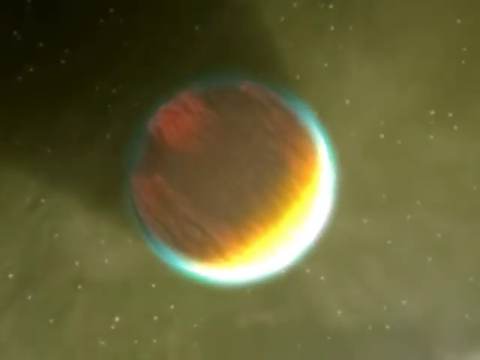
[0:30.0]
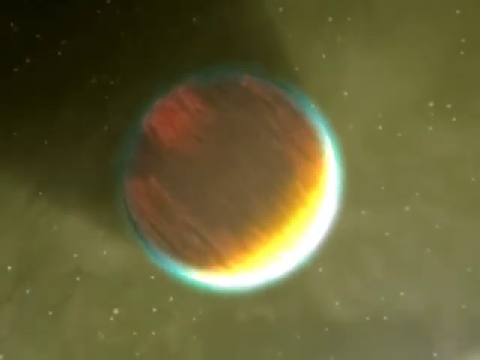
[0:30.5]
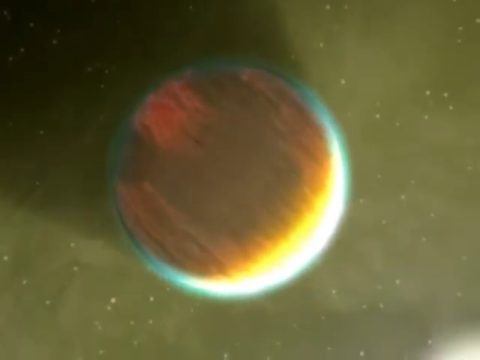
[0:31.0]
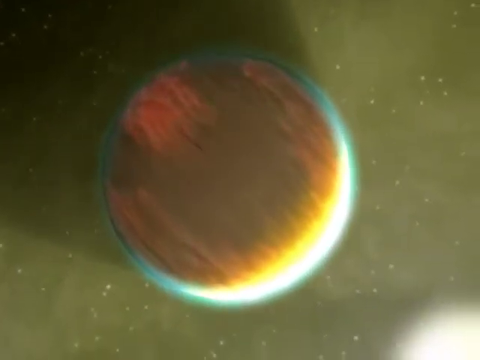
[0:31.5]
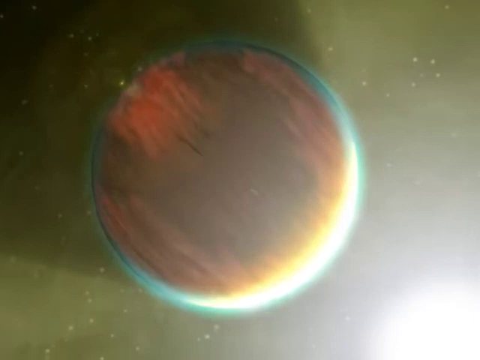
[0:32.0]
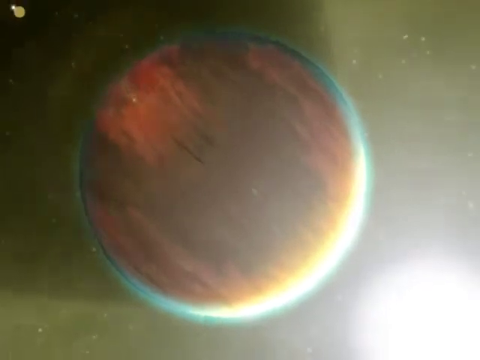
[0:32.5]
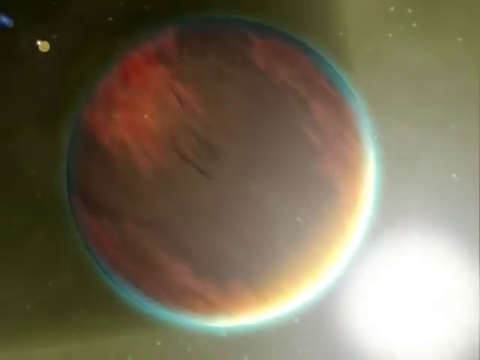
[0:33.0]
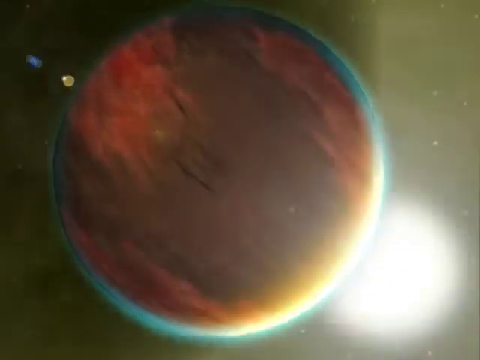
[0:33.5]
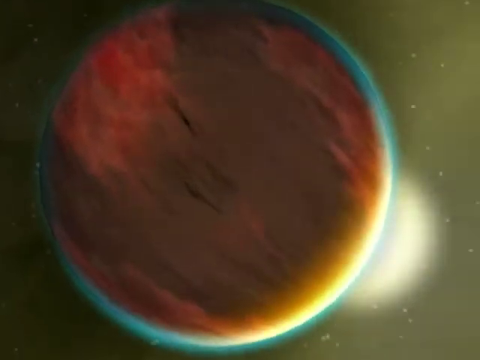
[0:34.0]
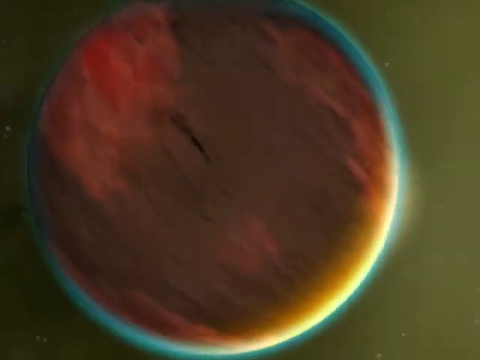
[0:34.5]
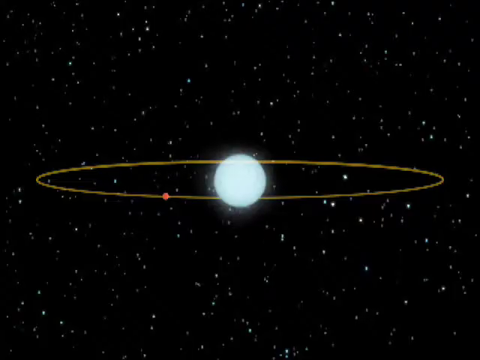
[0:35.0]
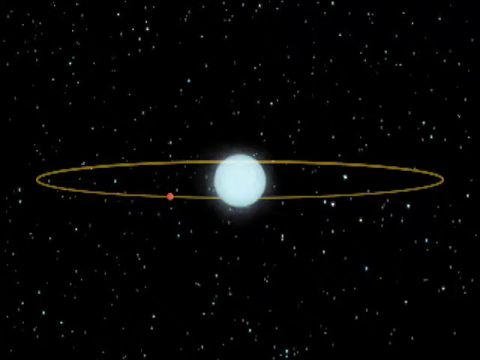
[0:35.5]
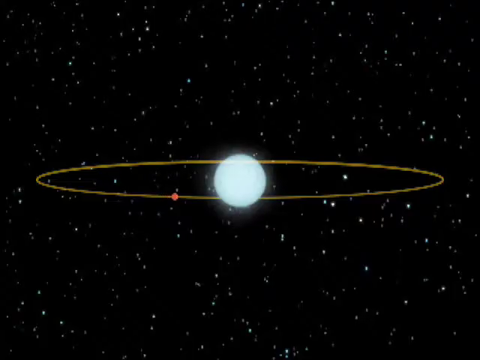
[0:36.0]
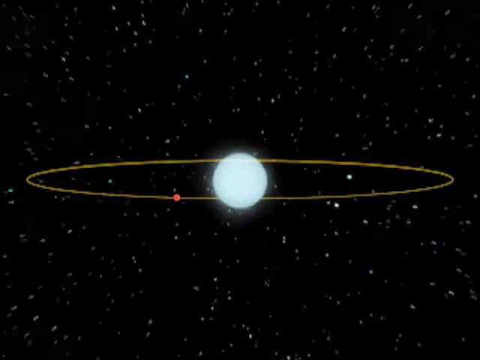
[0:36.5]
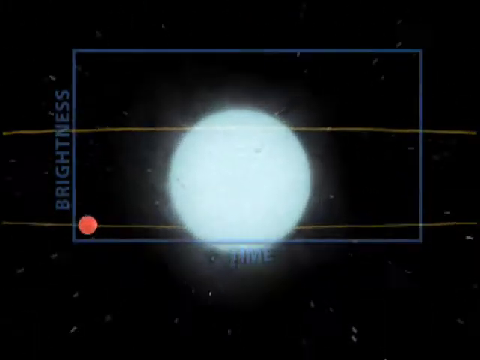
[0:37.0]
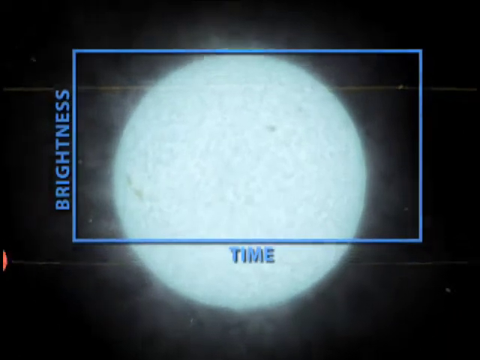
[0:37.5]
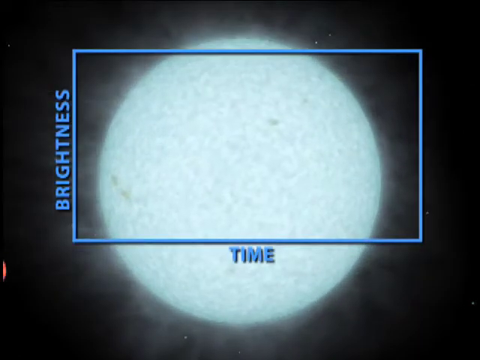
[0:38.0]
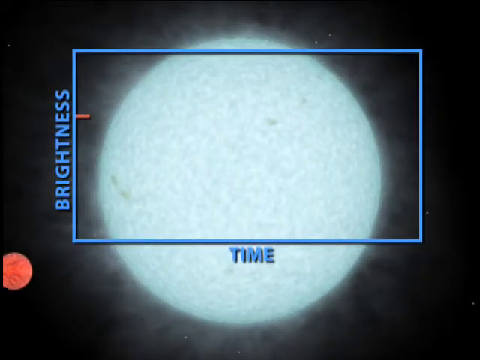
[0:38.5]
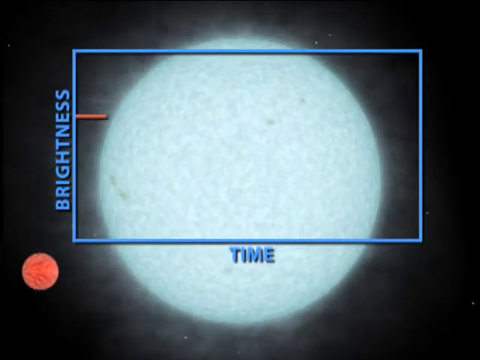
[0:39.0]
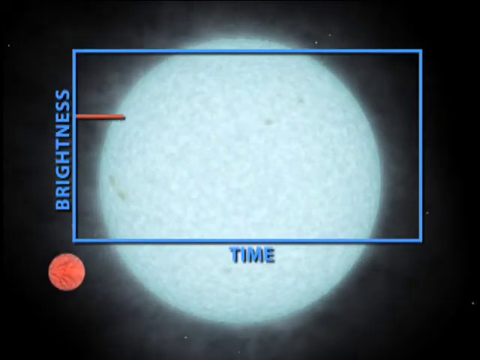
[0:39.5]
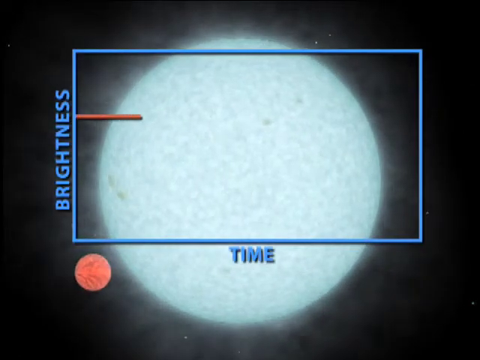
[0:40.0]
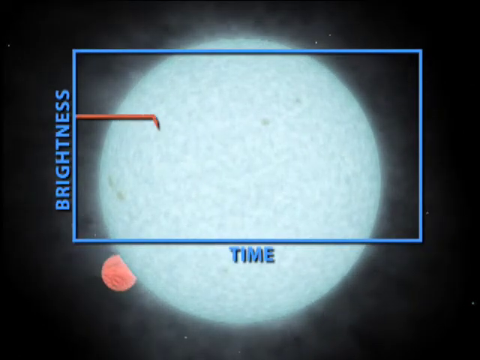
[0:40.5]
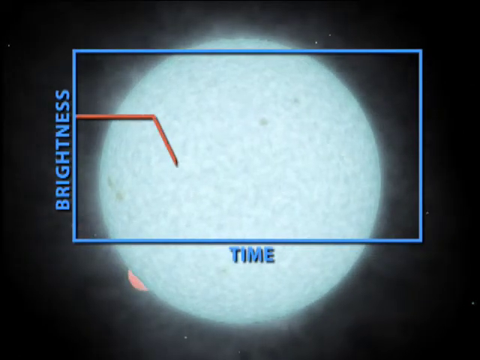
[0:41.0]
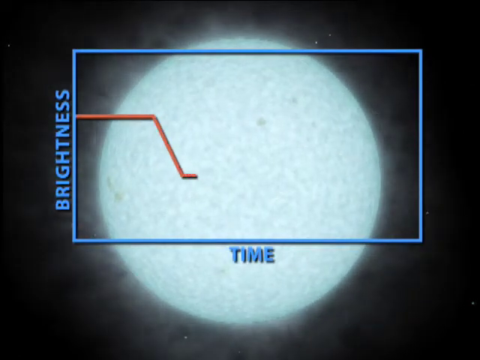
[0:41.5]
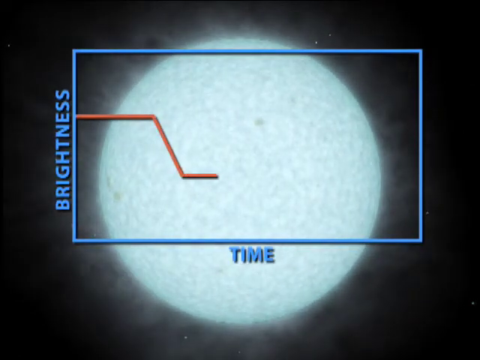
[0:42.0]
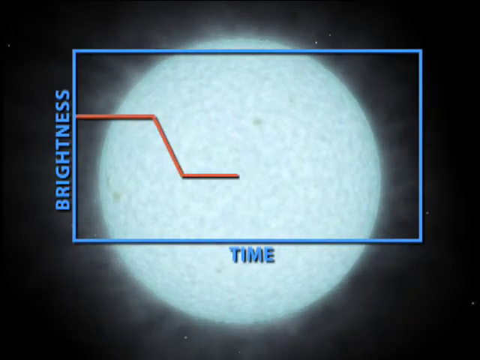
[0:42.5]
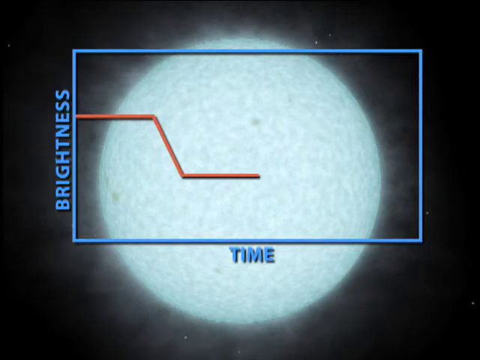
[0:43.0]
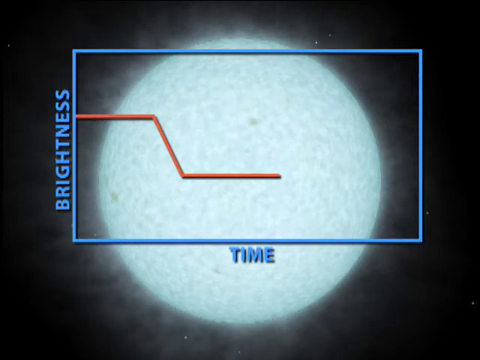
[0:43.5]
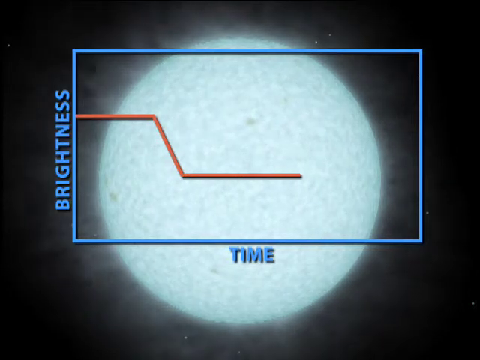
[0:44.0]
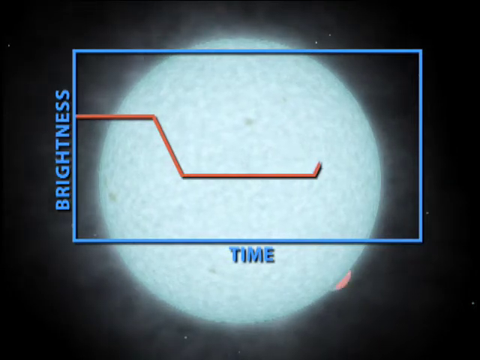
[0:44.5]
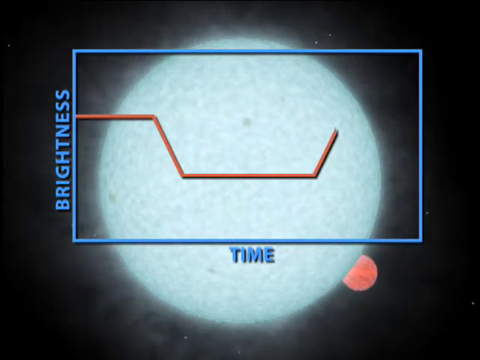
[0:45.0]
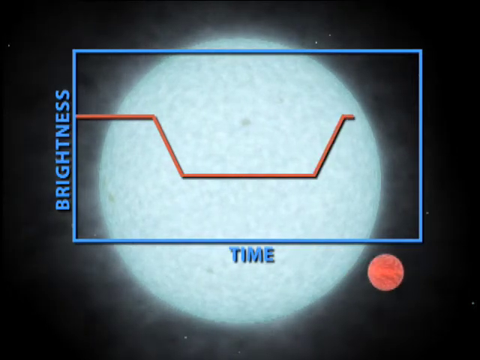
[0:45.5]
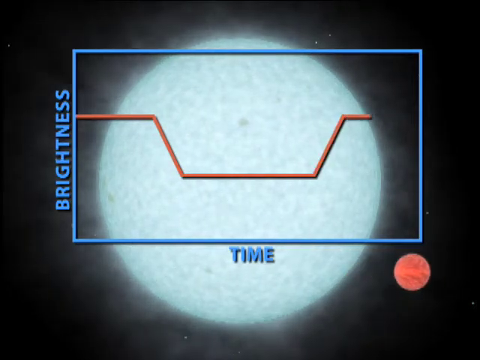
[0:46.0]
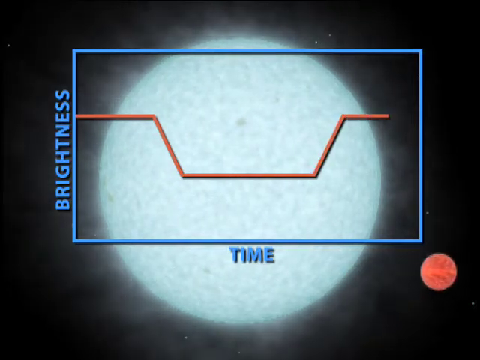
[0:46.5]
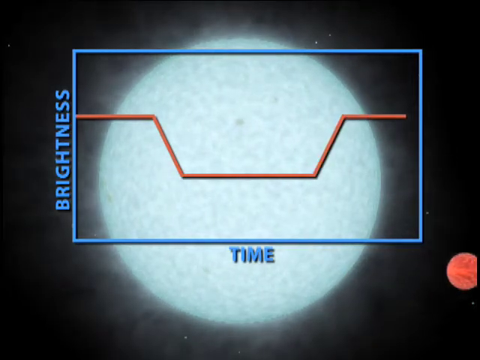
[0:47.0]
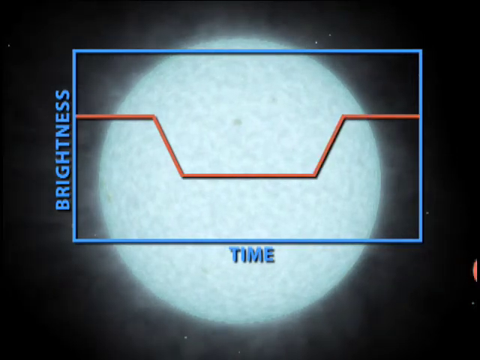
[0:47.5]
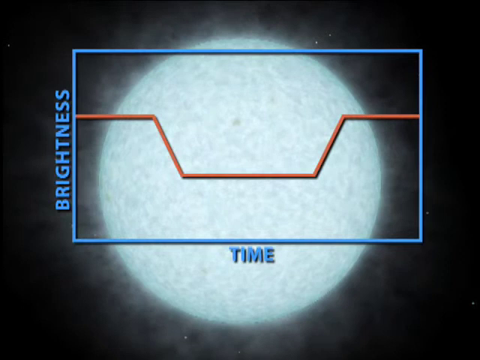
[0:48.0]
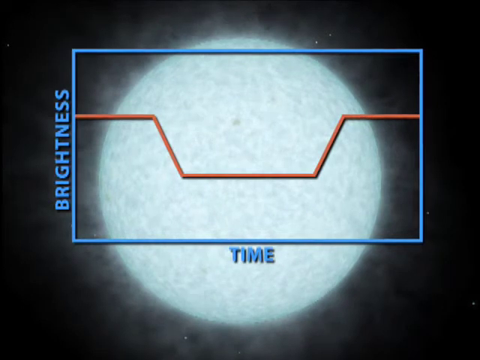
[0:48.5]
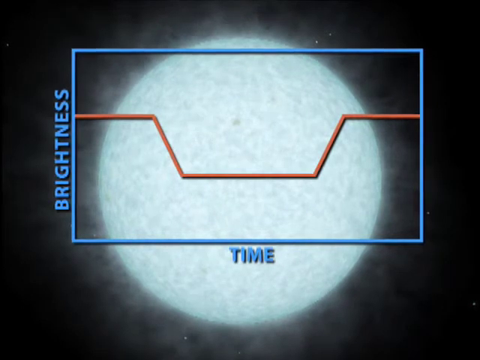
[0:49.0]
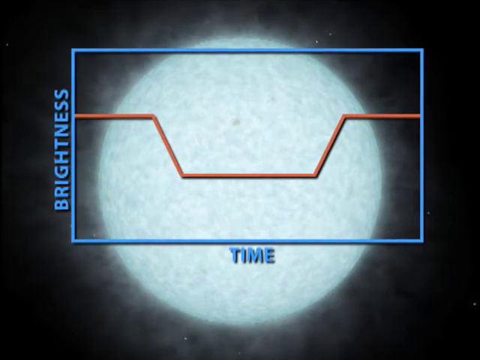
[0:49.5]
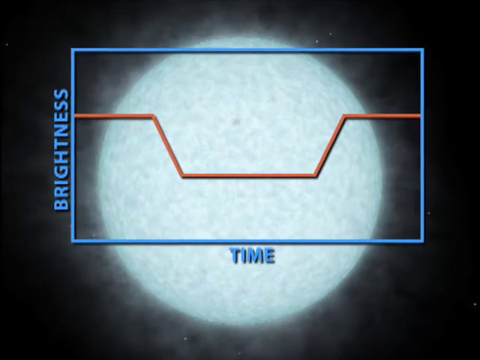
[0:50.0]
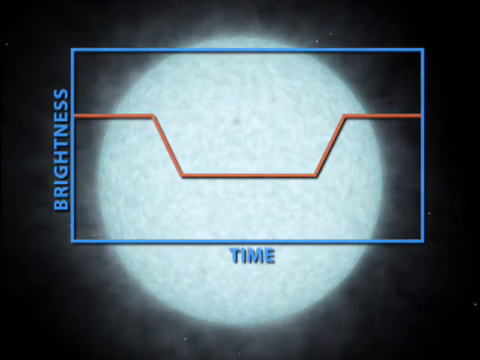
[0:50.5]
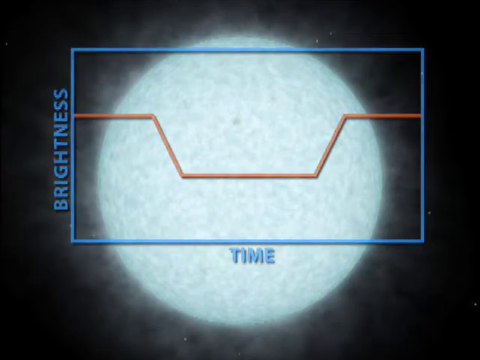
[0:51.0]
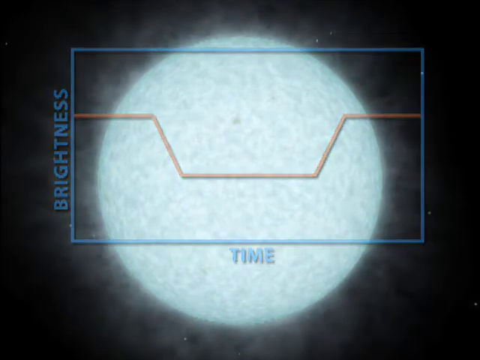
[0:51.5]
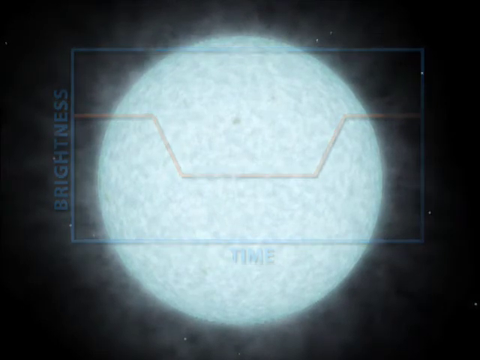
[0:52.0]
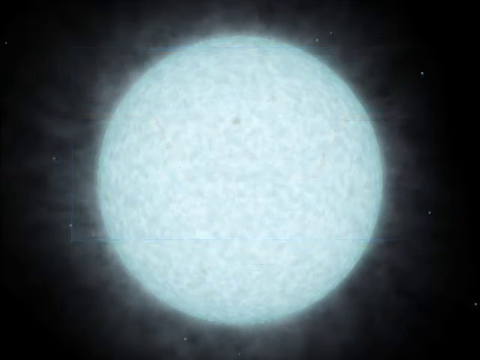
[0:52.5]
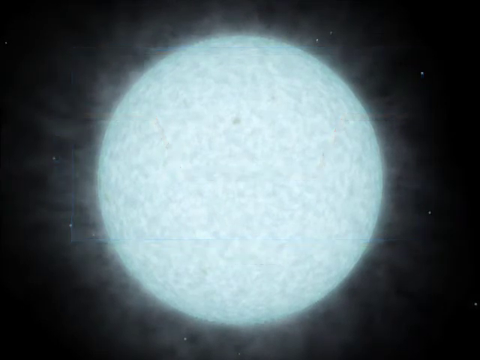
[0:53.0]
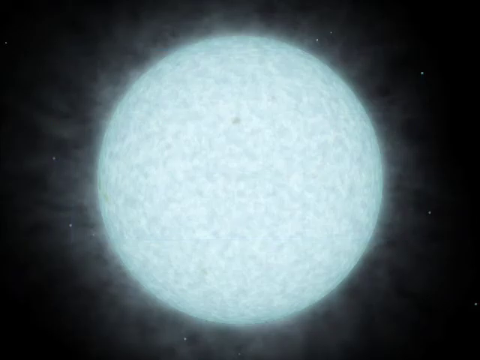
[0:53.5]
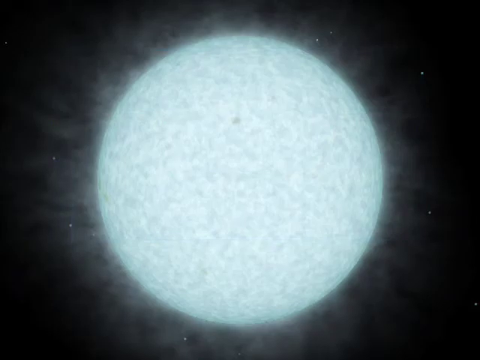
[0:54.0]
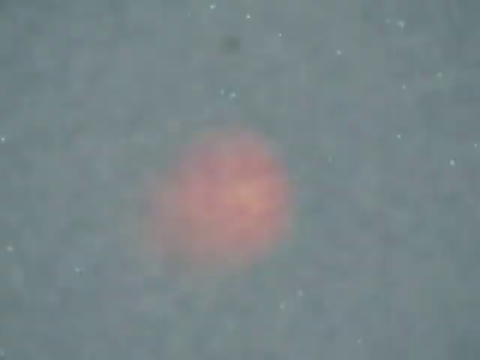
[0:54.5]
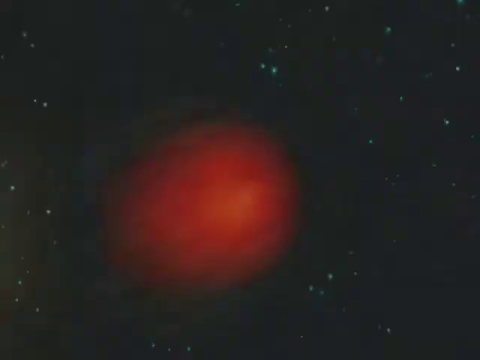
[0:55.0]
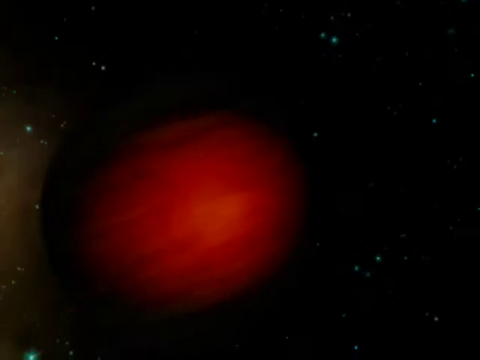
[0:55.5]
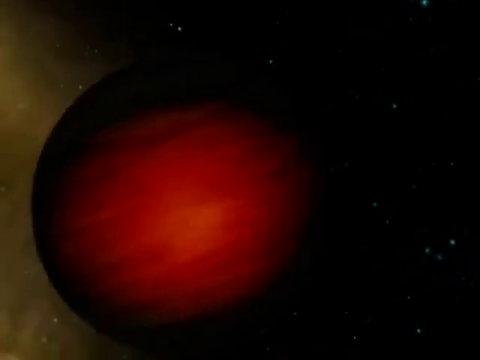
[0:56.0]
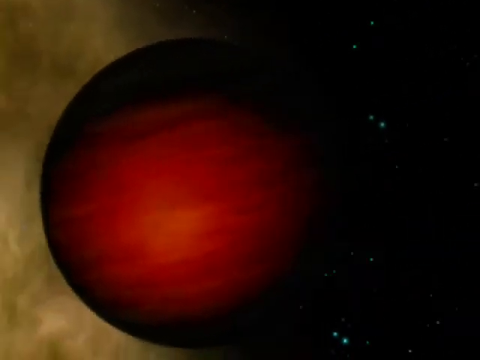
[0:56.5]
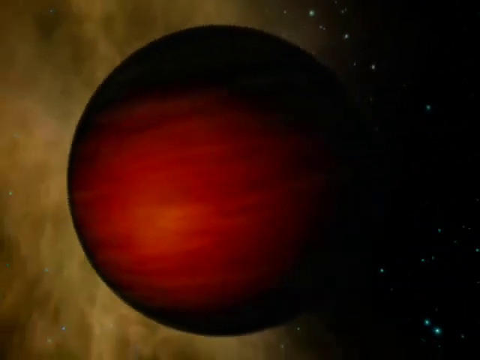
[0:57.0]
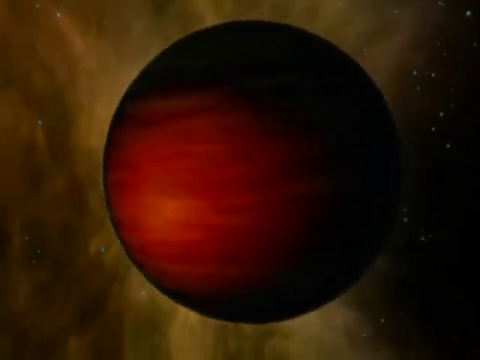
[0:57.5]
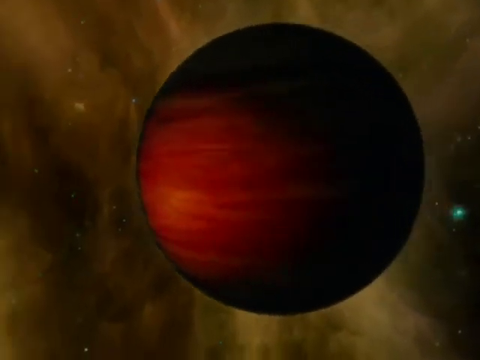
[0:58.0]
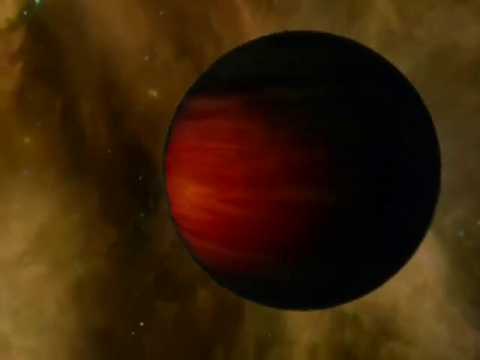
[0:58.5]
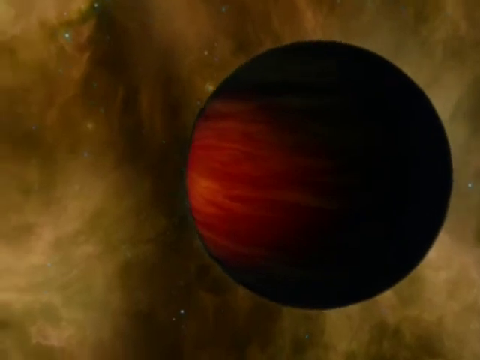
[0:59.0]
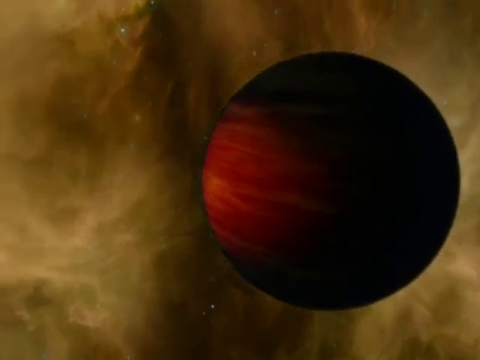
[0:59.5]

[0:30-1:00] What appears to be a planet is shown, an unidentified one, along with the brightness and the time. In the lower part, there is another planet moving fast.